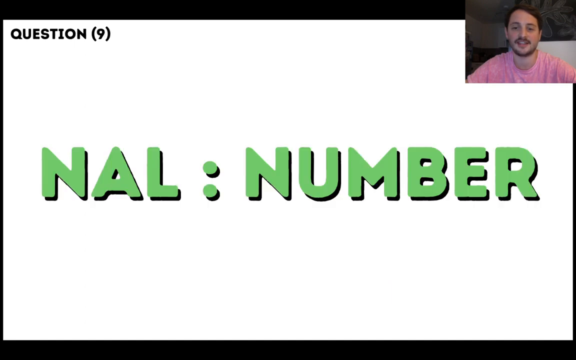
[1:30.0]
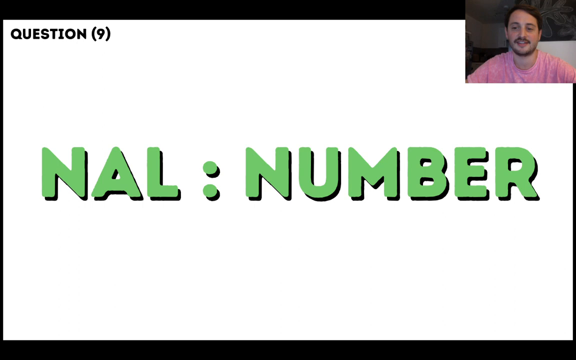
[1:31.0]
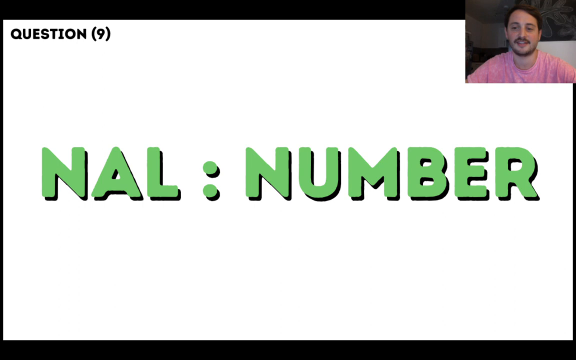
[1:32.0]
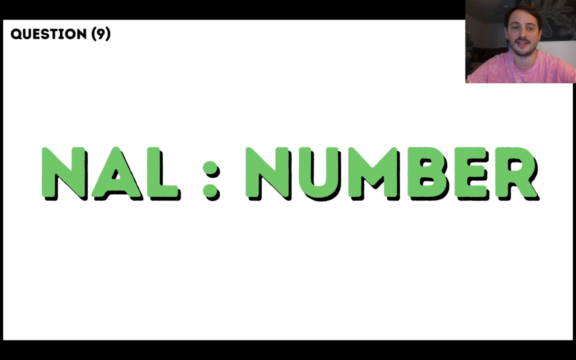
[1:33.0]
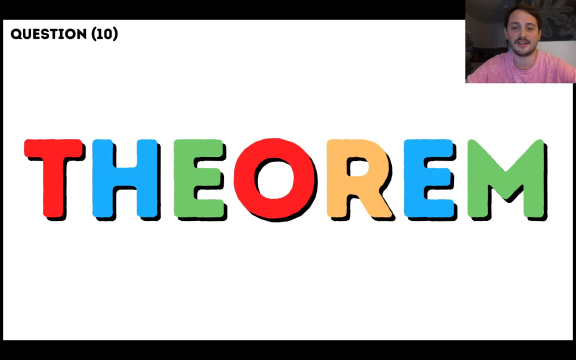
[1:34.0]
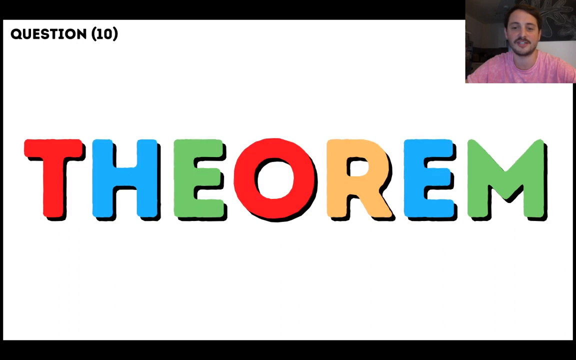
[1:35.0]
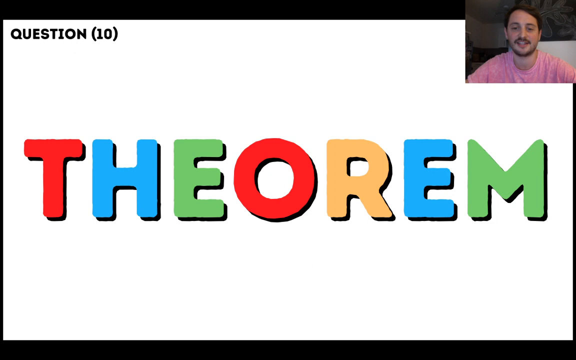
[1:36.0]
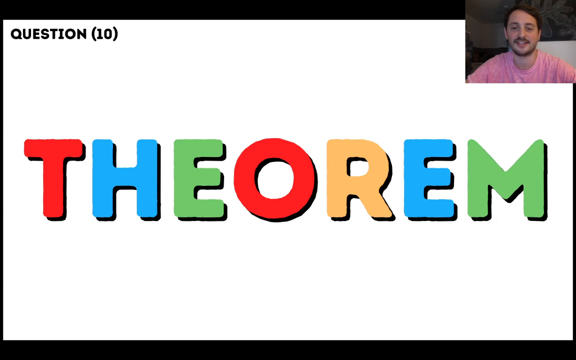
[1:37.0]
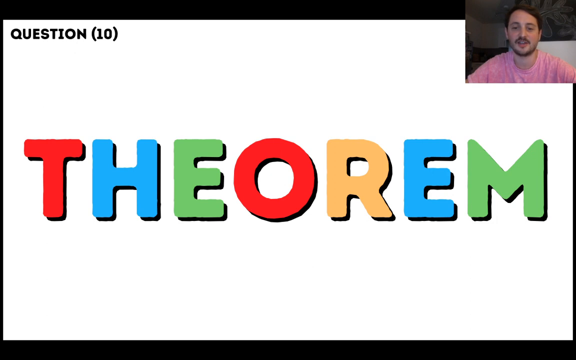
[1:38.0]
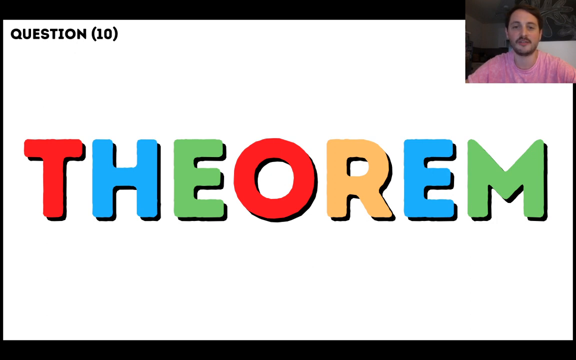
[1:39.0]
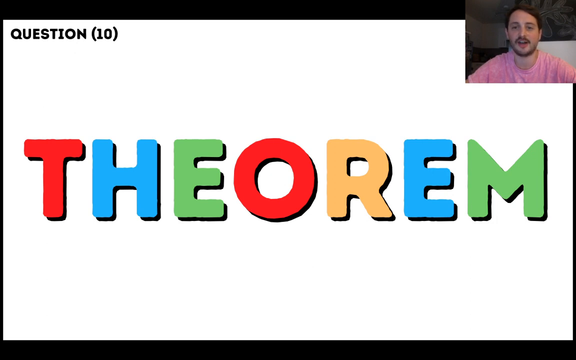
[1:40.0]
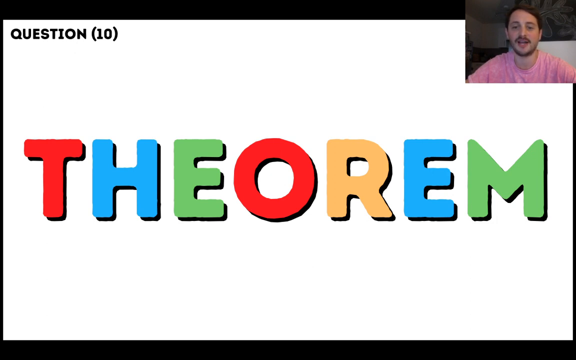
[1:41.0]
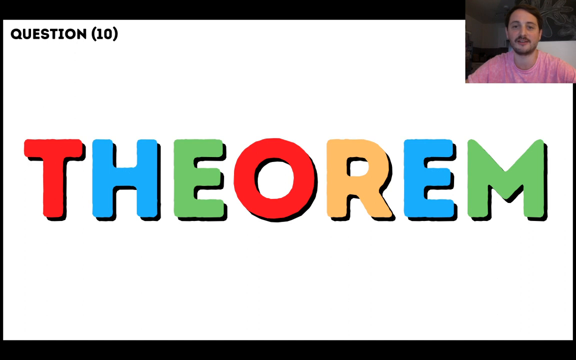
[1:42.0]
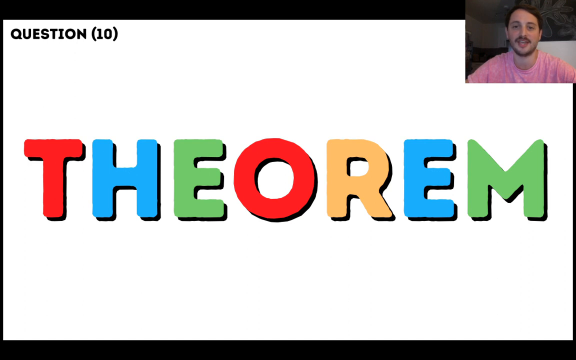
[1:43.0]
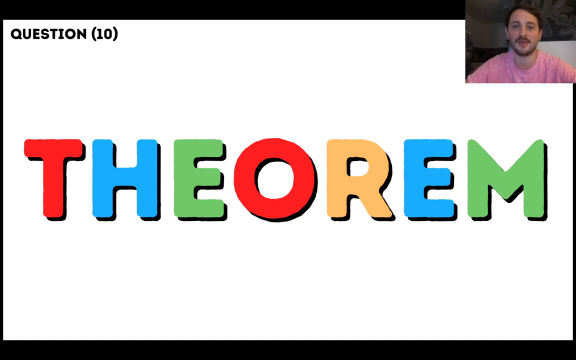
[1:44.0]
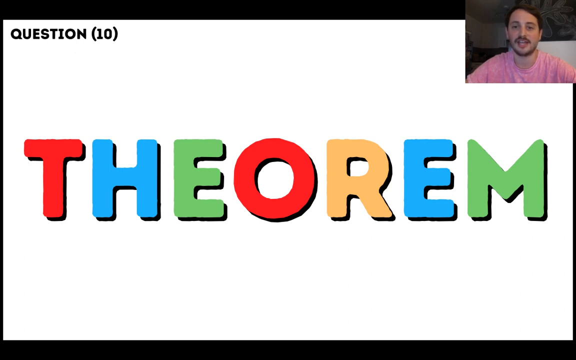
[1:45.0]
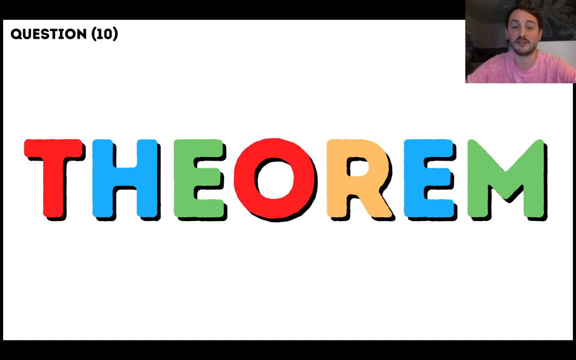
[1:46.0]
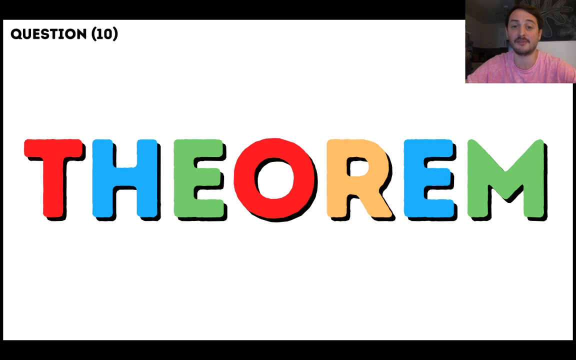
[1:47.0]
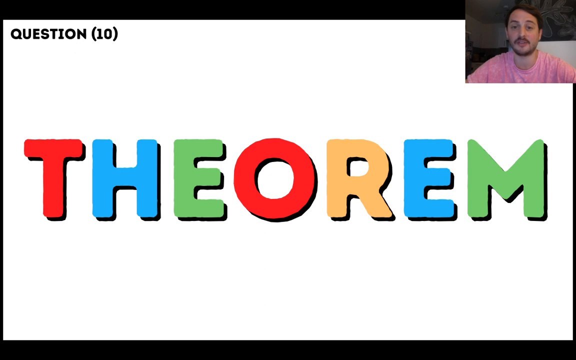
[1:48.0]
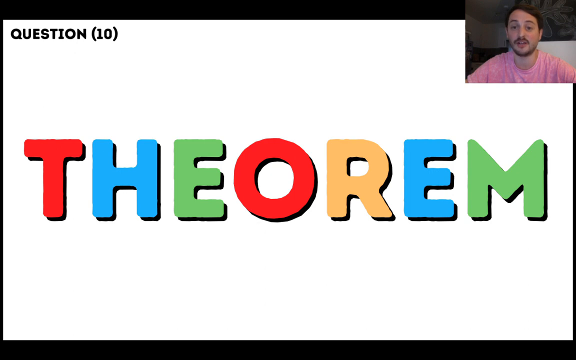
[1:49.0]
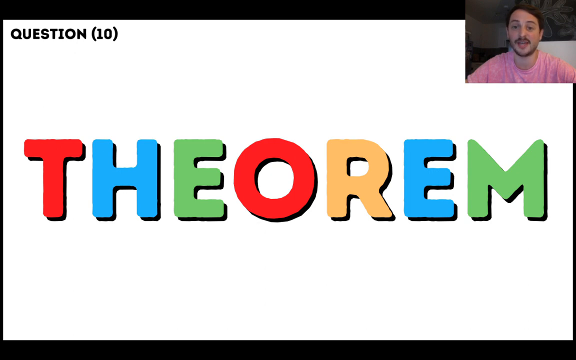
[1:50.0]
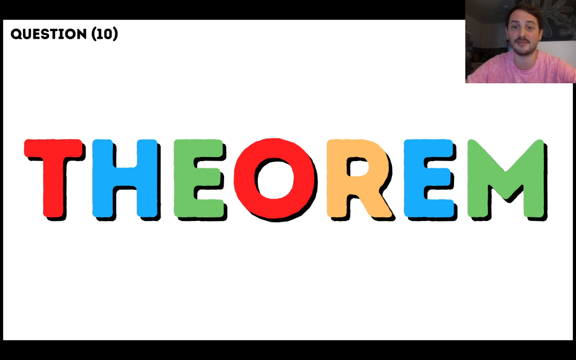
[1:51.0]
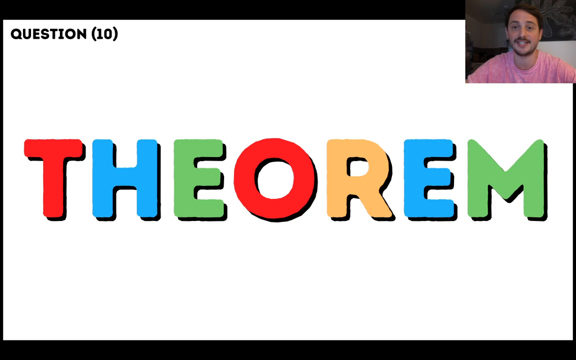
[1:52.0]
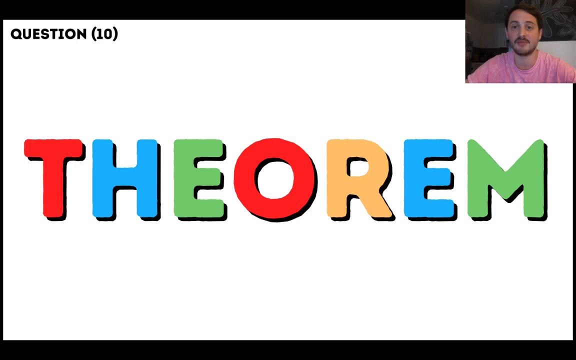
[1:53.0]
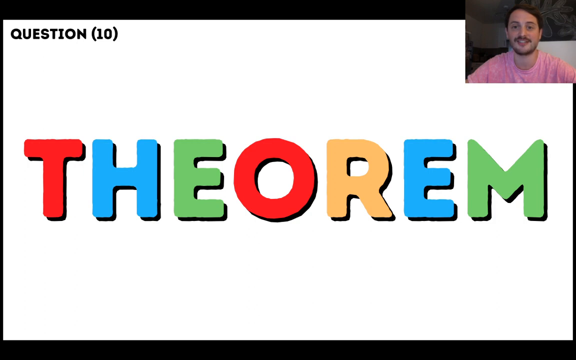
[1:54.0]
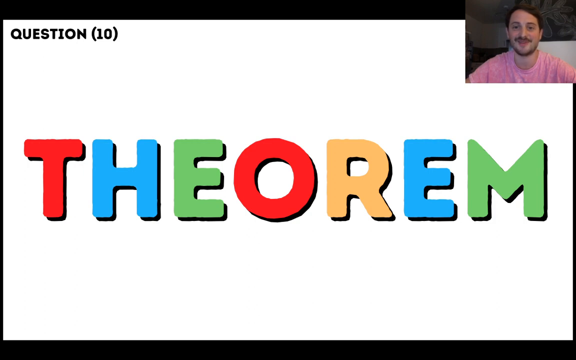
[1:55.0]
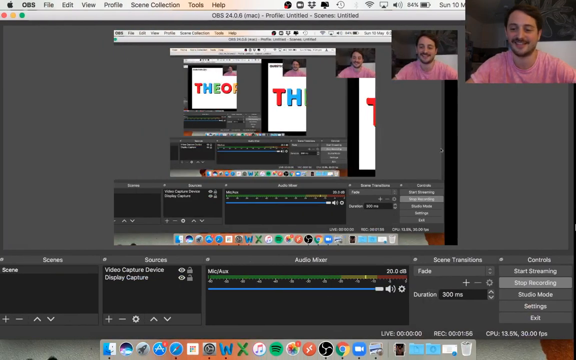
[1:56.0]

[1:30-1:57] The man remains in the top right, speaking as he goes through the questions. Question nine shows "NAL;NUMBER" in bold green letters with the black 3D backing, on a white background. The view switches to question ten, on which he spends the most time, with "Question 10" at the top left and the man in the top right. It shows "THEOREM" with each letter in a different, alternating color: the T and O in red, the H and E in blue, the E and M in green, and the R in yellow, again with the black 3D backing. After he talks a bit more, the video switches to the looping infinity screen shown at the beginning, moving from the biggest screen through to the very smallest at the end of the video.